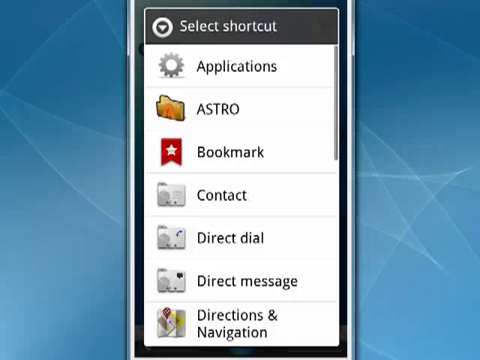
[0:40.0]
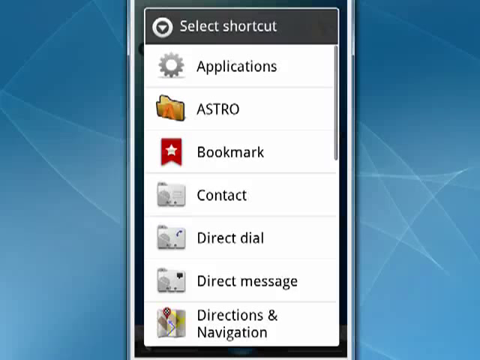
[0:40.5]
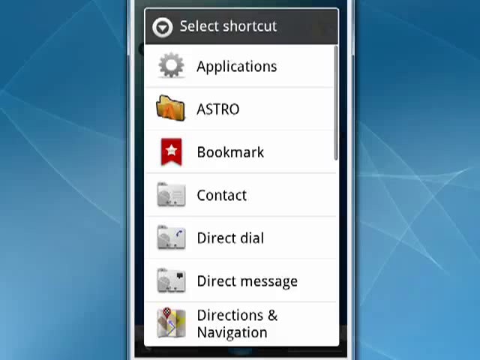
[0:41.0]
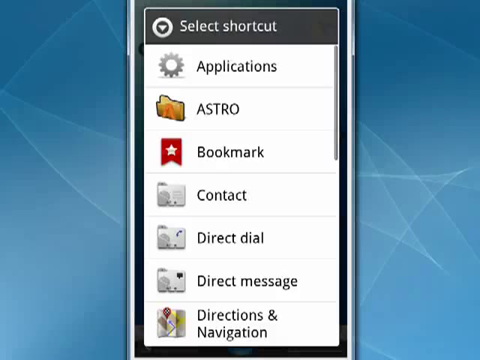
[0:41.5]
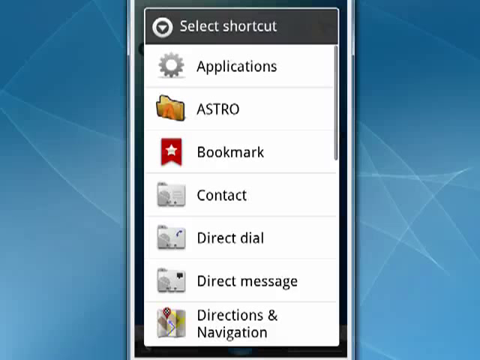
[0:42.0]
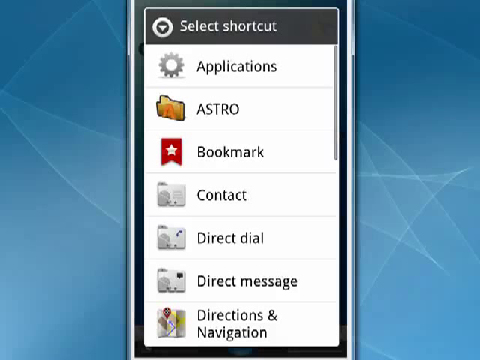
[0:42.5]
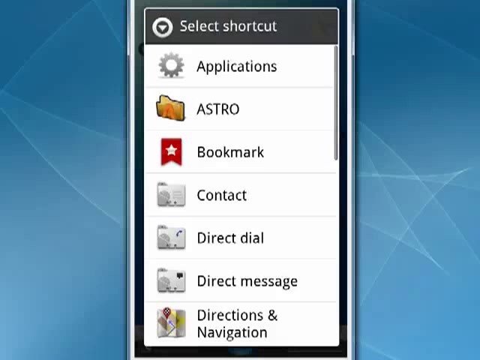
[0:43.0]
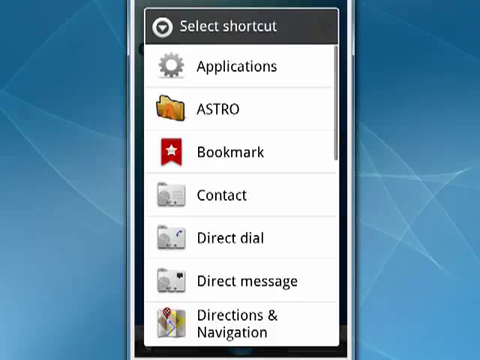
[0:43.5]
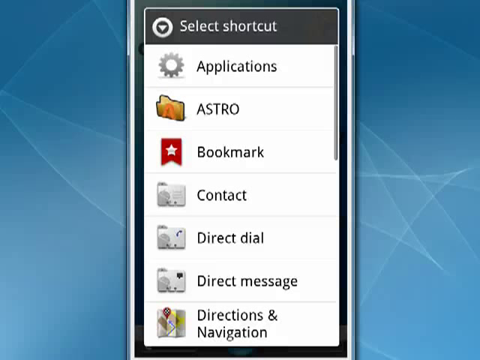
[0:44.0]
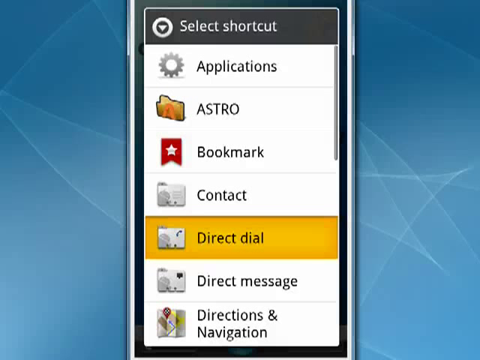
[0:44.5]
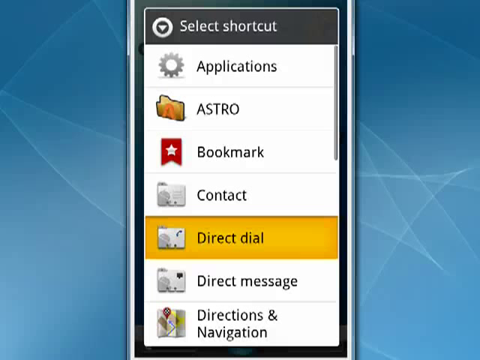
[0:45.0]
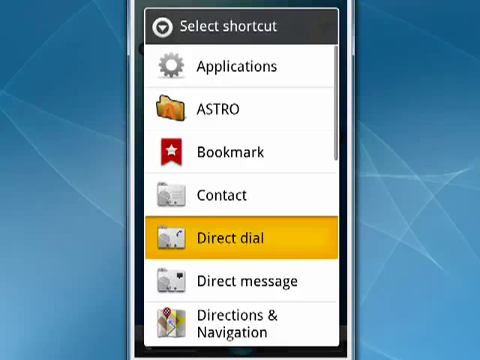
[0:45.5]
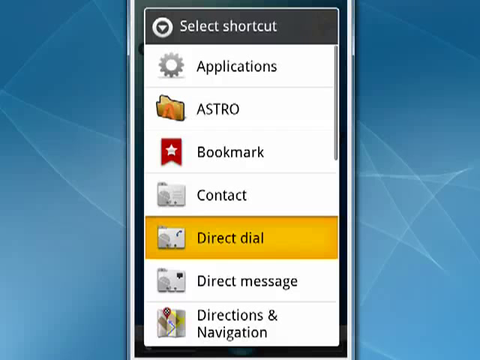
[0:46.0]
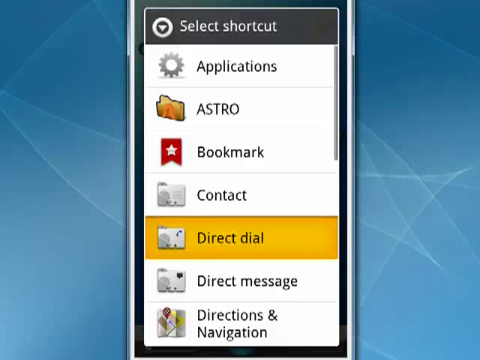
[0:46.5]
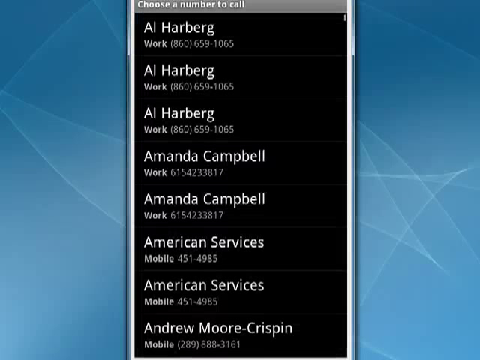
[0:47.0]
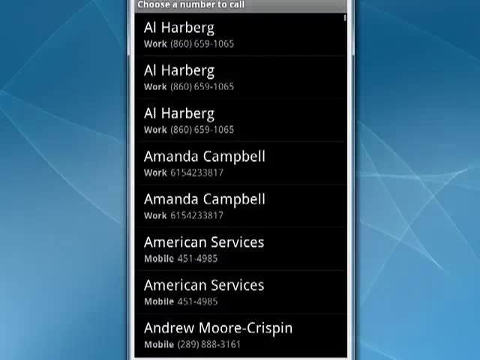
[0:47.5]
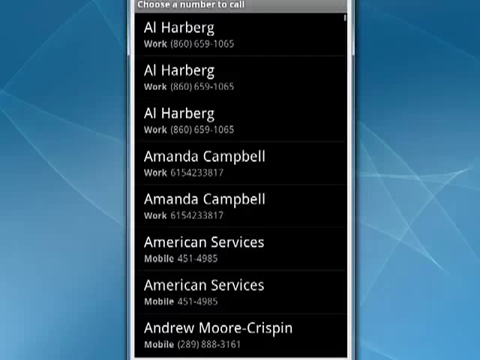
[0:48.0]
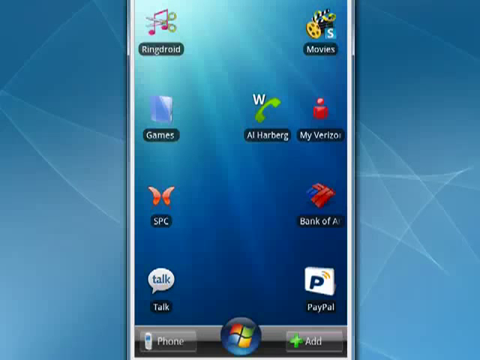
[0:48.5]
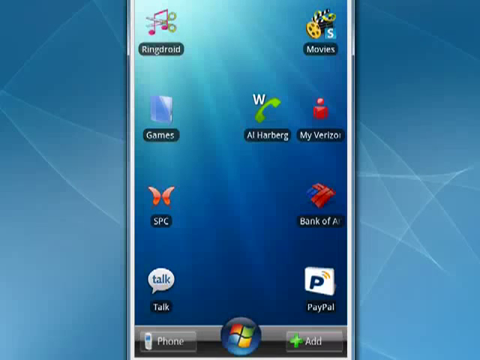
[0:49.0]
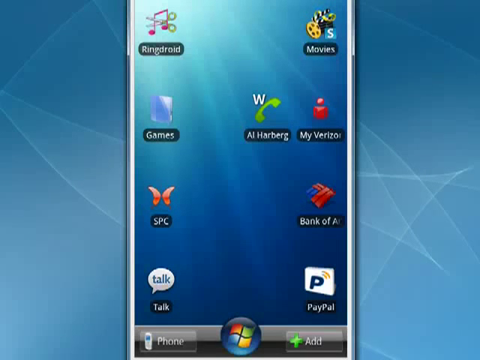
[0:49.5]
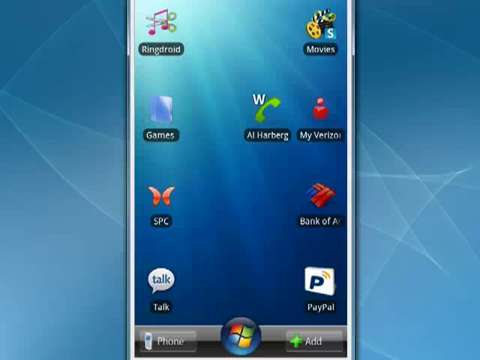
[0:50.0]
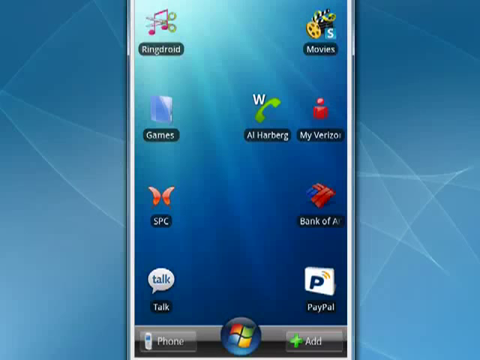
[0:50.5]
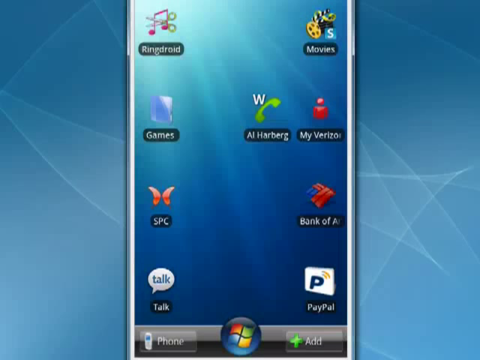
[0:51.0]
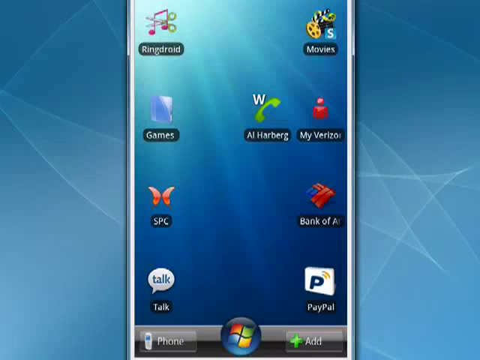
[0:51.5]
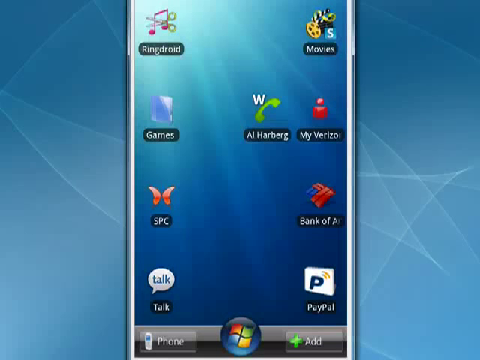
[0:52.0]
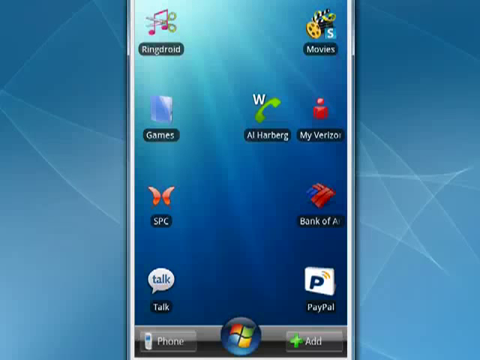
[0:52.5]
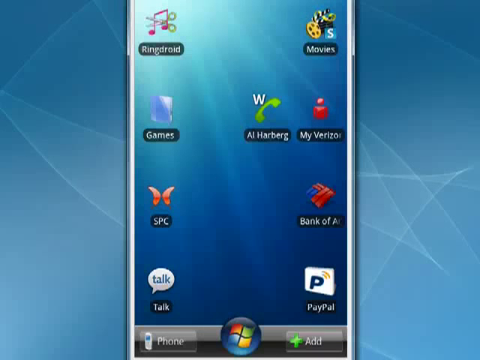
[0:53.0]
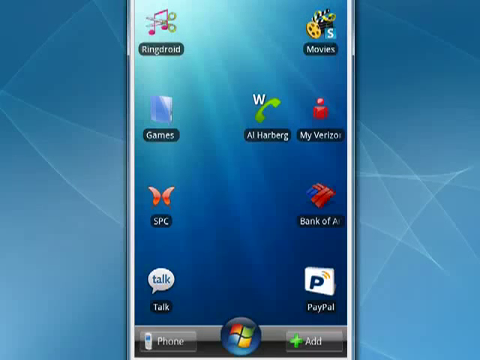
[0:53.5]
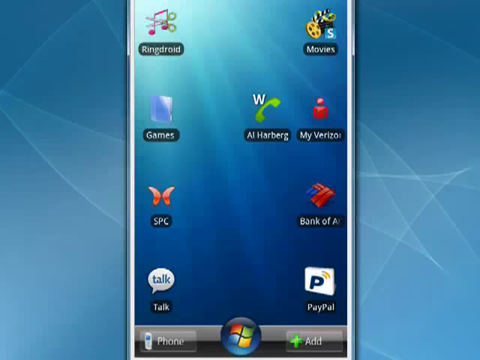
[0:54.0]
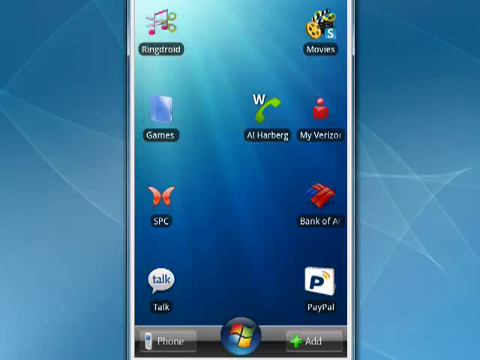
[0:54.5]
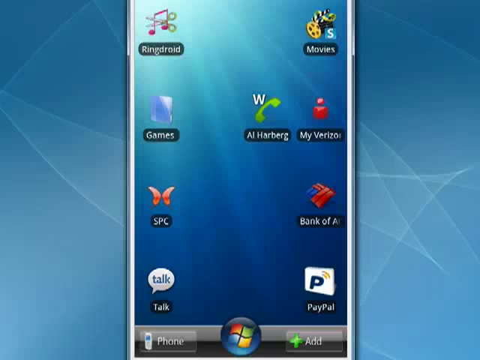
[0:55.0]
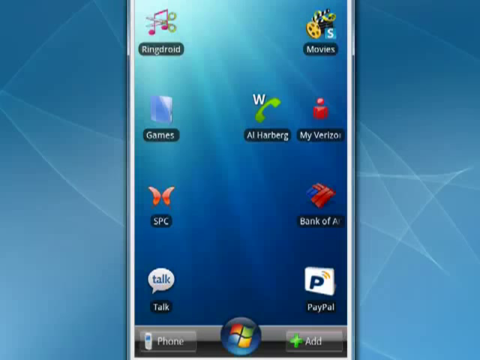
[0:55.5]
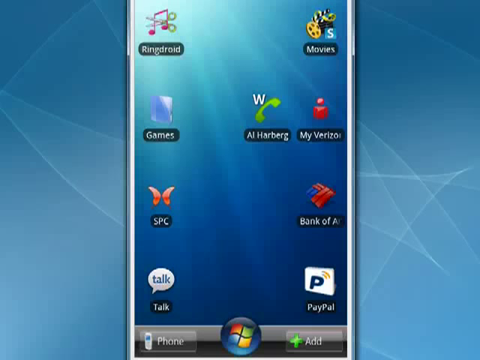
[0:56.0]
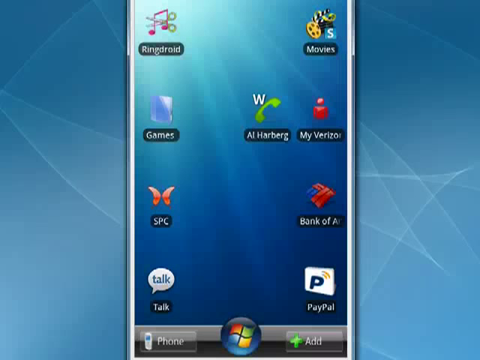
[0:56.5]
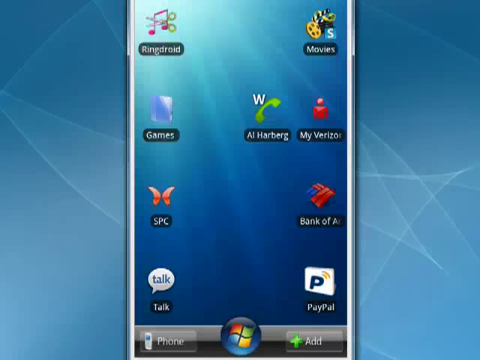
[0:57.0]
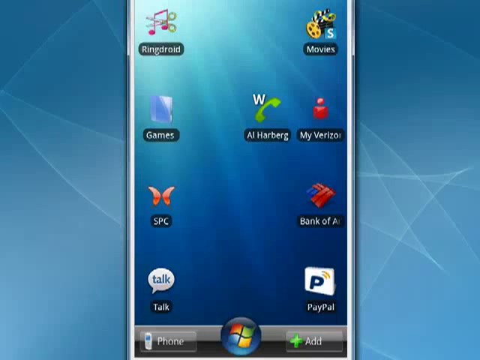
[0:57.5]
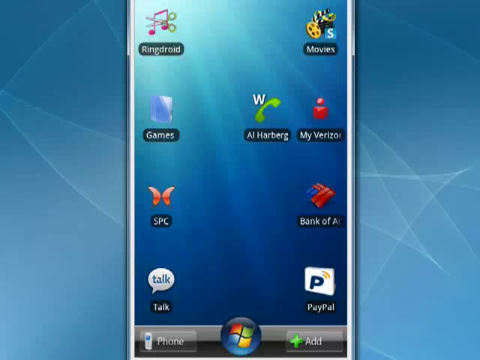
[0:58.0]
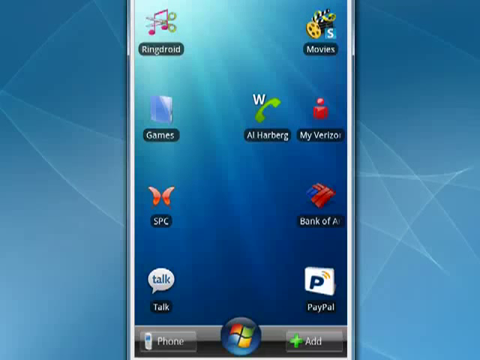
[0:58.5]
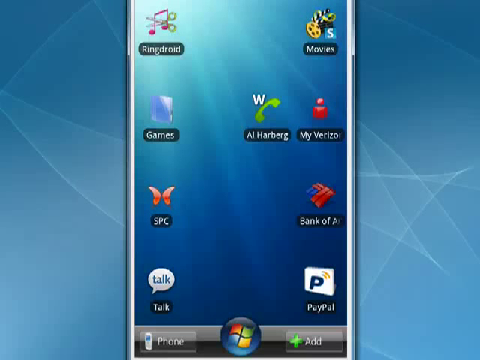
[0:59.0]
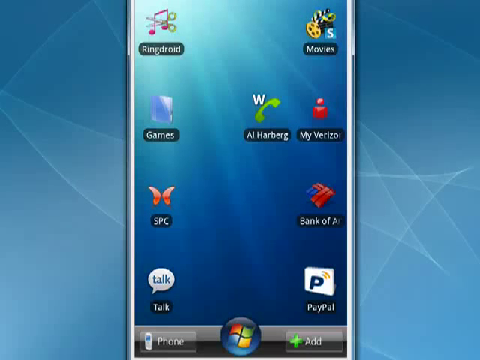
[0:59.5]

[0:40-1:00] A long menu is on the phone in the center of a blue background, with "Direct Dial" selected in yellow. Another black and grey menu comes up briefly, headed by a gray bar with the title "Choose a number to call." From top to bottom it lists "Al Harberg: Work (860) 659-1065," with the same name and number repeated two more times; then "Amanda Campbell: Work 6154233817," repeated one more time; then, under Amanda's name, "American Services, Mobile, 451-4985," also repeated one more time; and last, Andrew Moore Crispin with mobile 289-888-3161. The menu then disappears, and a new green icon is on the phone next to "My Verizon": a green phone icon with a white W, labeled "Al Harberg."